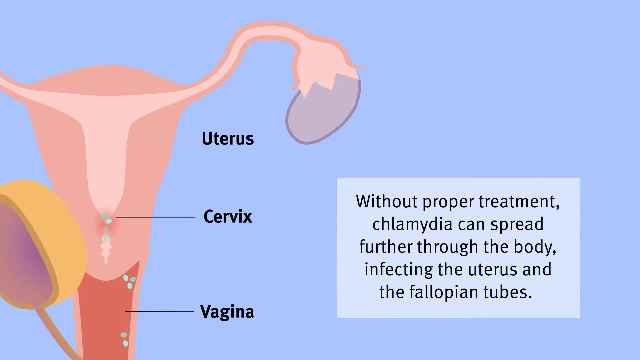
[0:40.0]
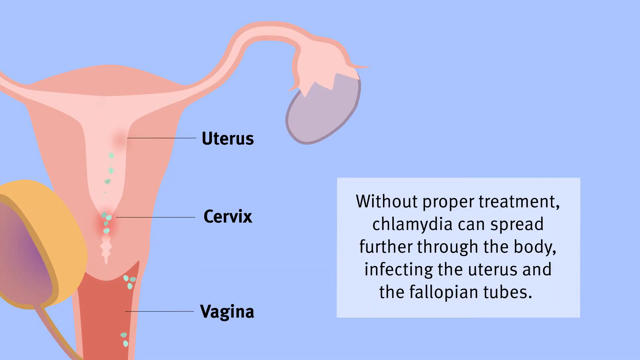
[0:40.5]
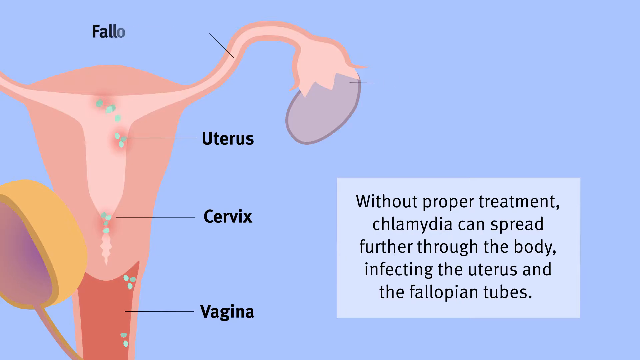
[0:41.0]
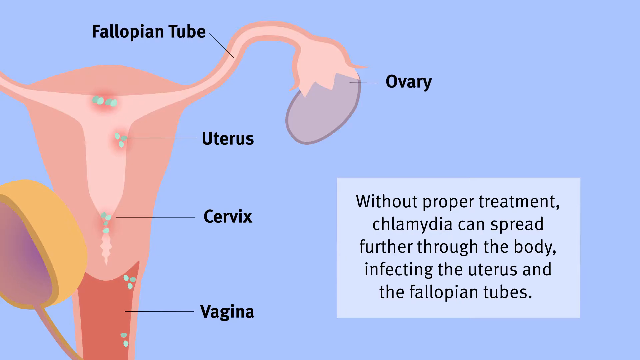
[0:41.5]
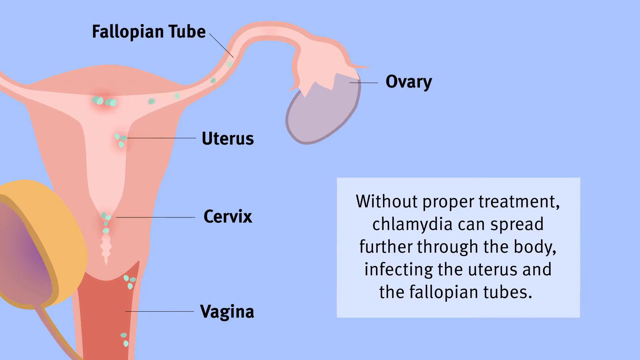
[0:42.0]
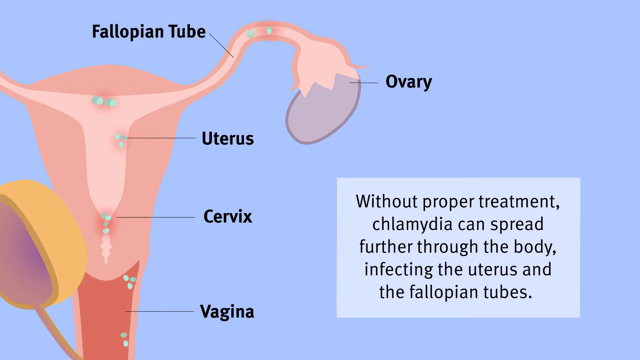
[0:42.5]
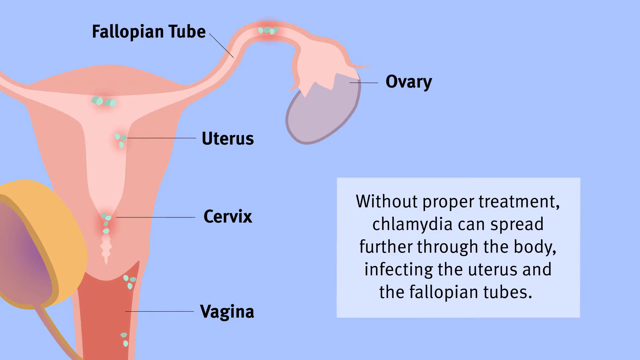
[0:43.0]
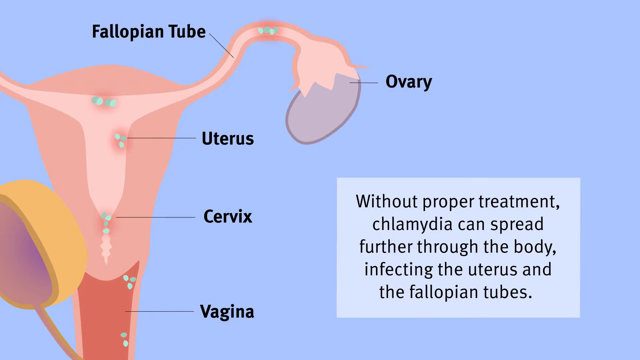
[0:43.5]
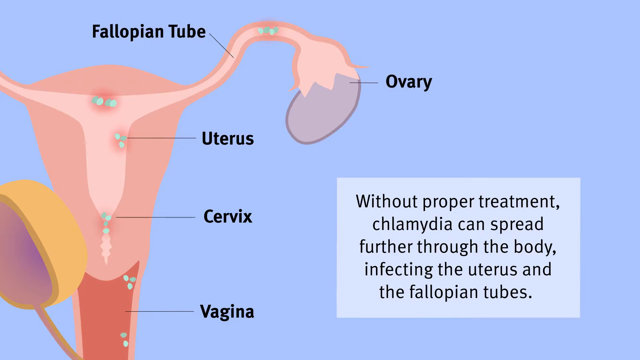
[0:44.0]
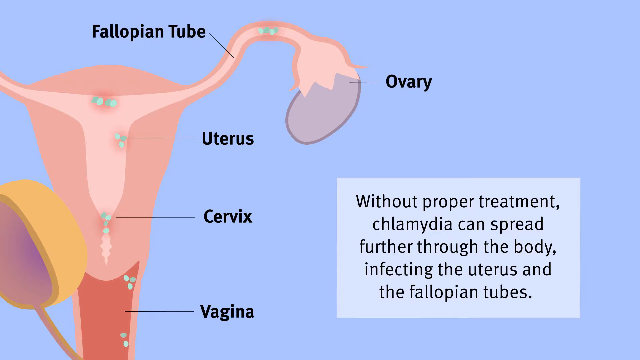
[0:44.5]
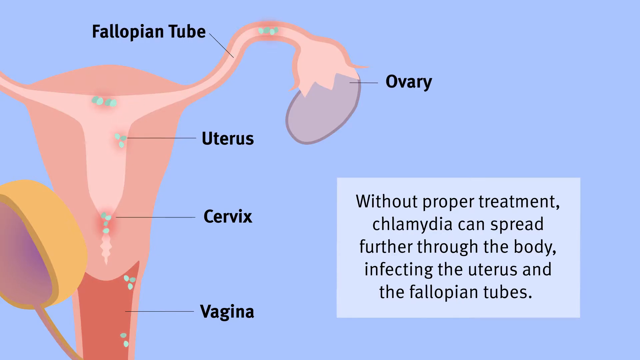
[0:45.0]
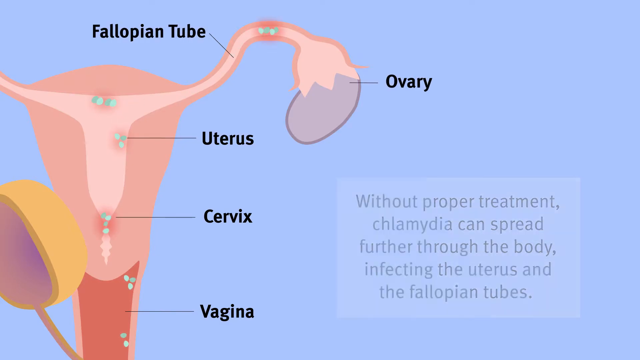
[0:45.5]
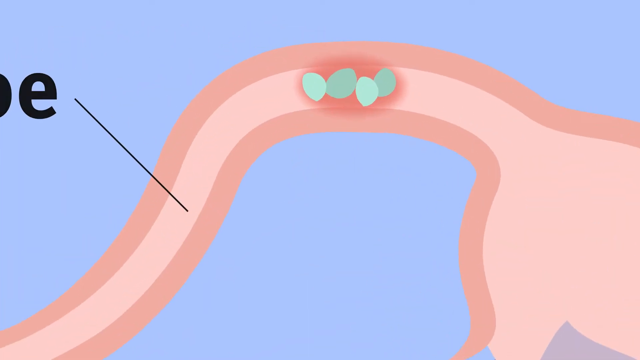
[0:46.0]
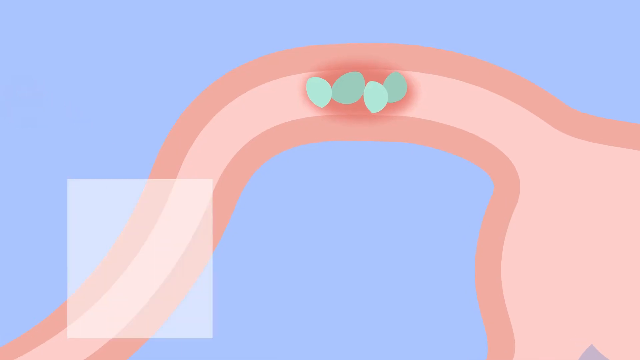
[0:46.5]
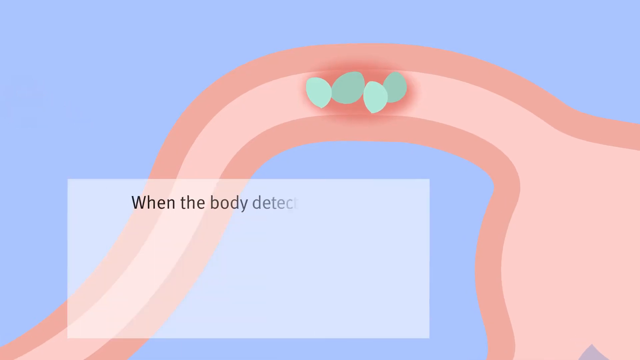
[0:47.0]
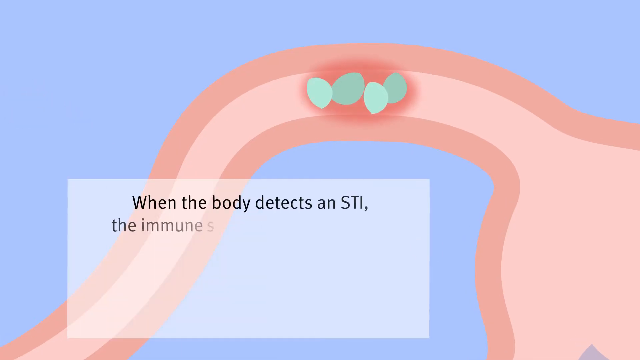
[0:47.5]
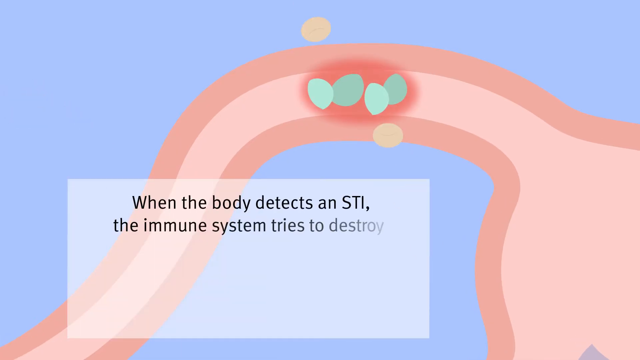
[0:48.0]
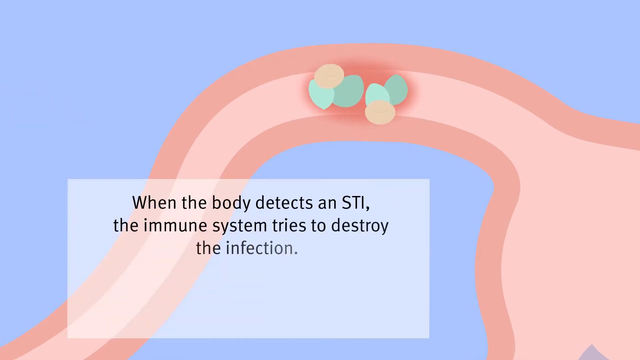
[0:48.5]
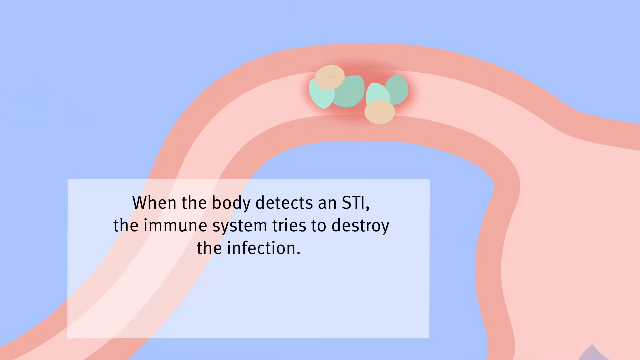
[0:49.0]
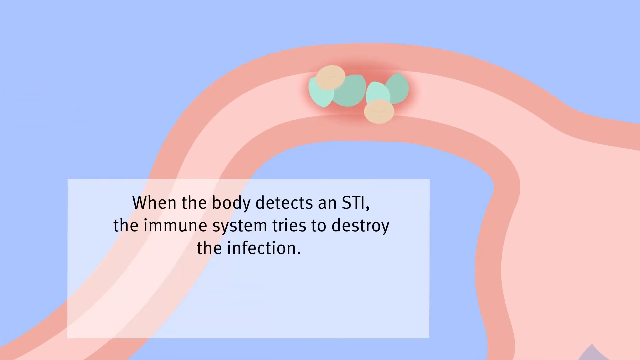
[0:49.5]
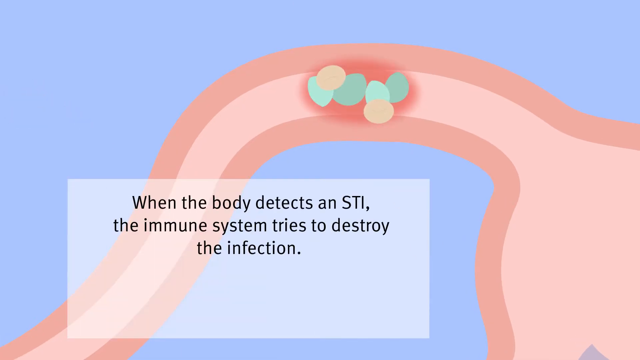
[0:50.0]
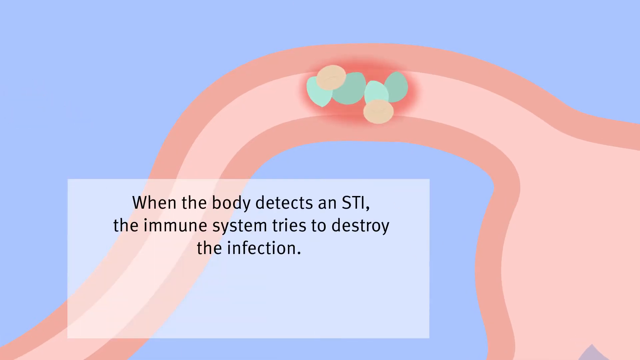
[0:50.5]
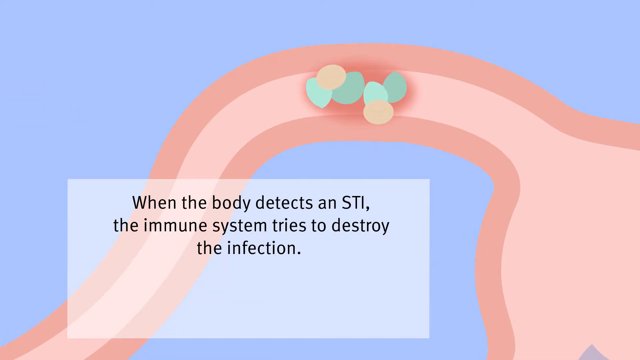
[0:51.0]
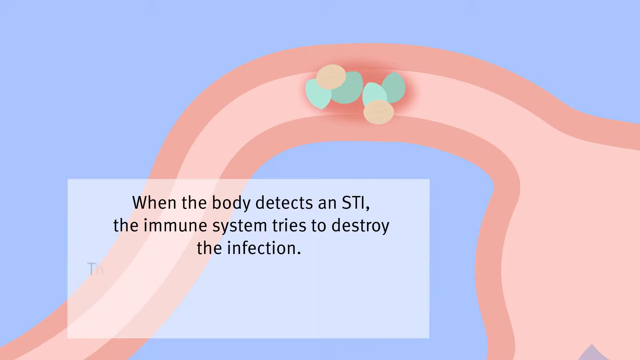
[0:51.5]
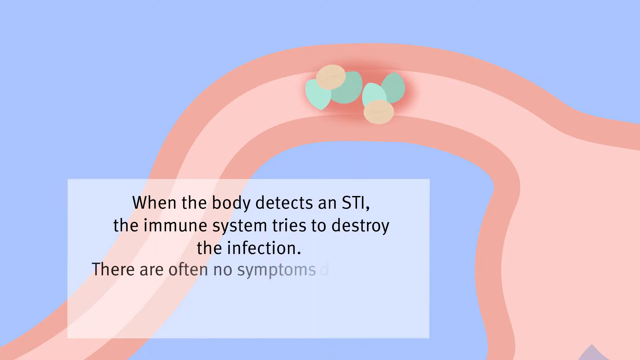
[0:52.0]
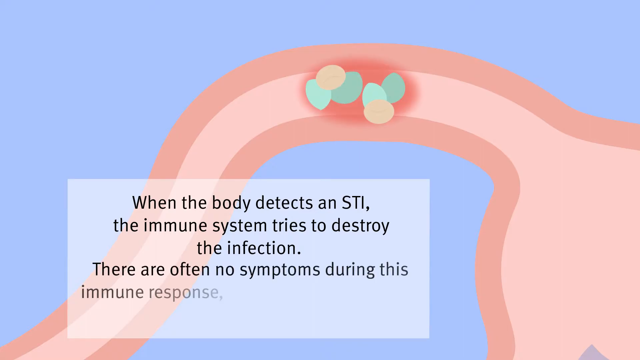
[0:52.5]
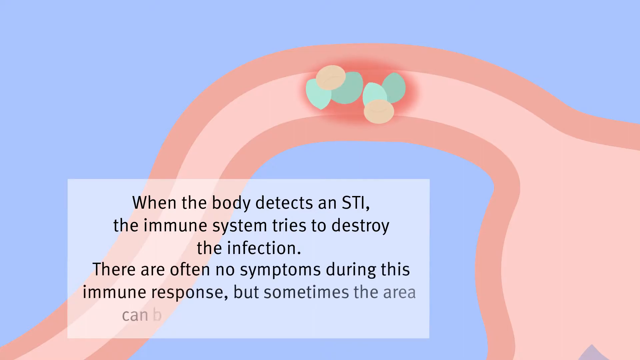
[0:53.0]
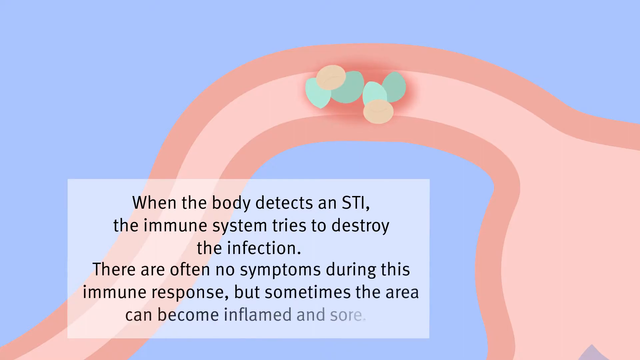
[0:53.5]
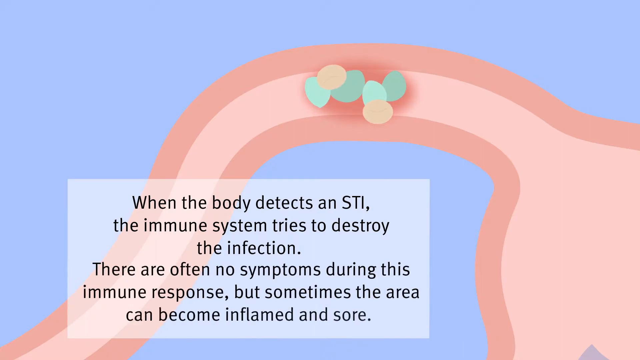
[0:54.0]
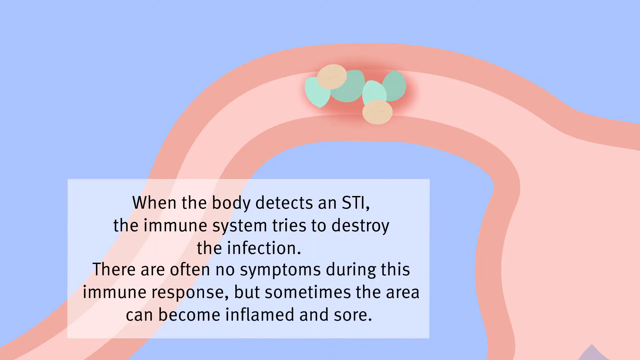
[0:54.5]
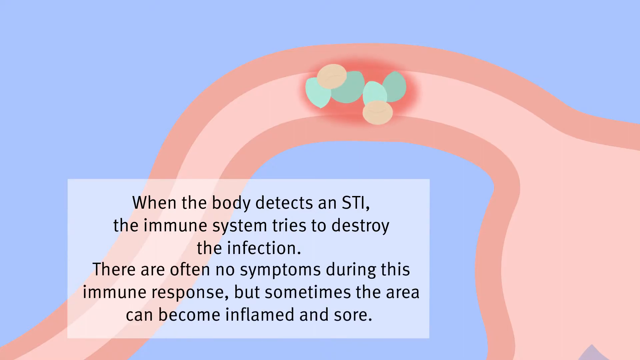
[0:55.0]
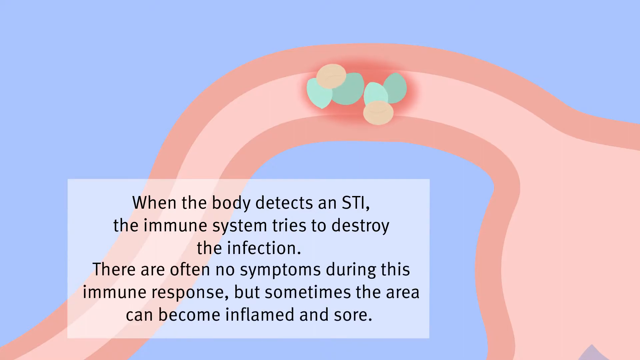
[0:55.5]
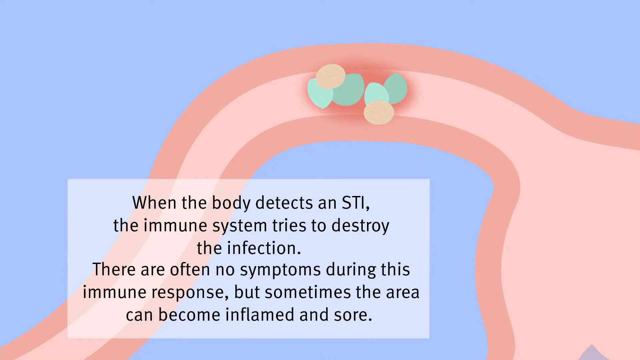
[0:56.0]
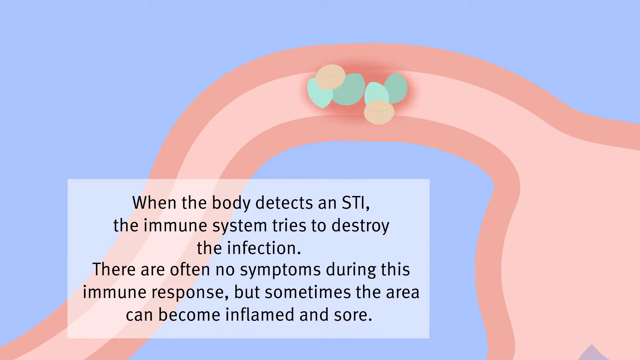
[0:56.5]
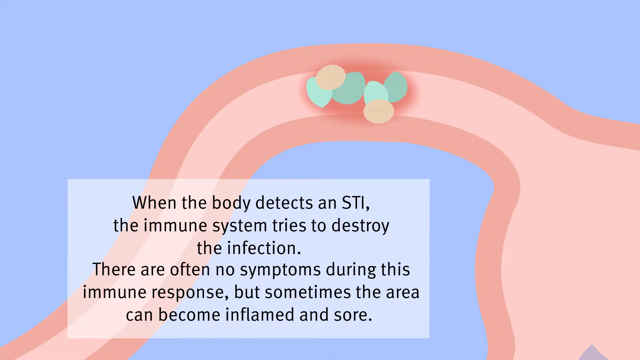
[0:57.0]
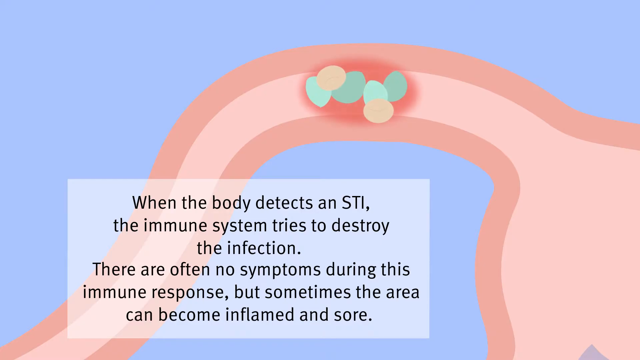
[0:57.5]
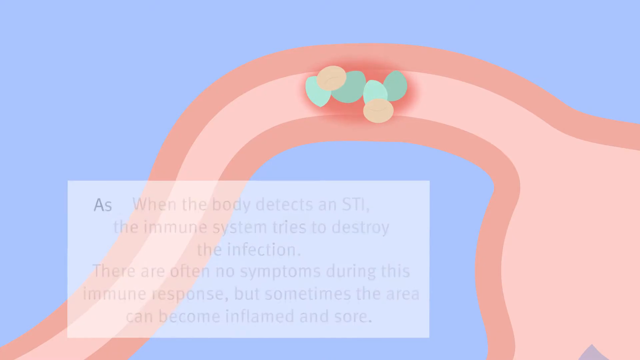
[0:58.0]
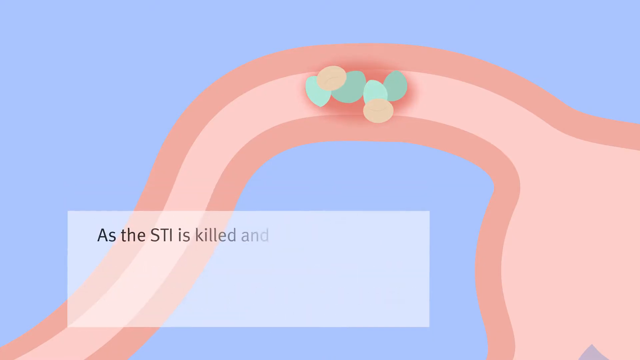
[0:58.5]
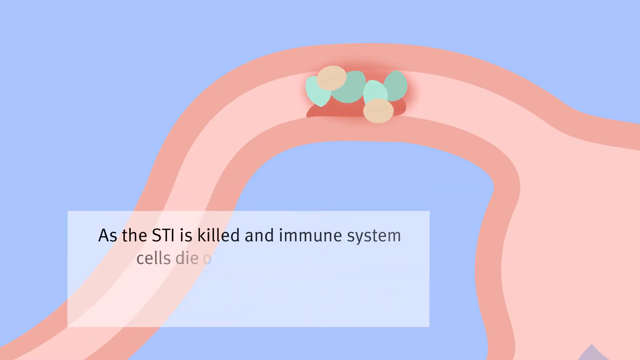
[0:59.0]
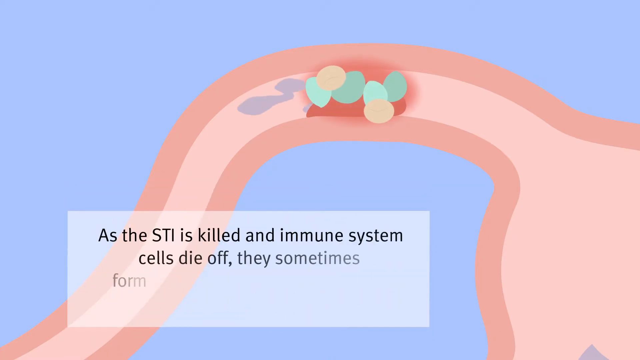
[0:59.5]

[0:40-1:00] Against a blue background, kind of computer-generated cartoon body parts are shown. A female reproductive tract is shown with text saying it can affect the cervix, throat, anus, eyes and urethra. On the next slide, the female reproductive tract has lines and words in black font labelling "uterus," "cervix" and "vagina." On the right-hand side, a gray box with black letters reads "without proper treatment, chlamydia can spread further through the body, infecting the uterus and the fallopian tubes." The fallopian tubes are labelled, and a little virus that looks like green balls is shown going into them. A label for the ovary starts to appear. Then there is a close-up of the chlamydia germ cells in the fallopian tubes, with the text "when the body detects an STI, the immune system tries to destroy the infection."